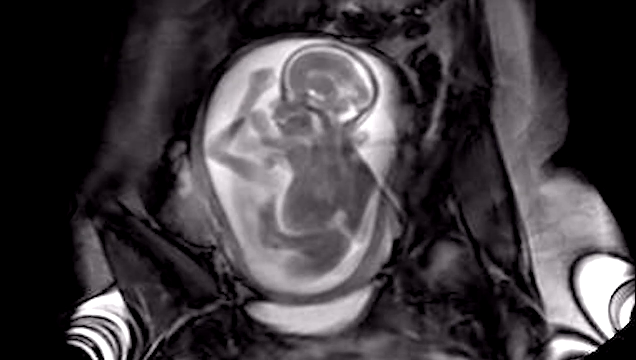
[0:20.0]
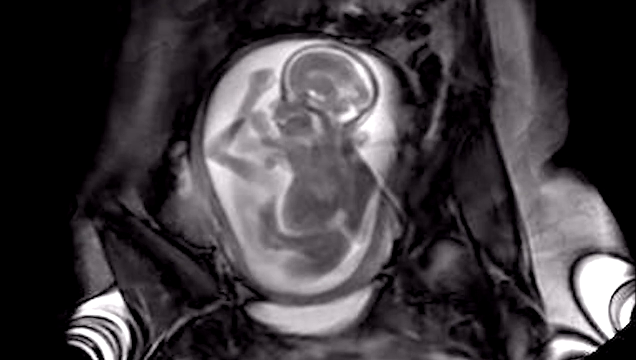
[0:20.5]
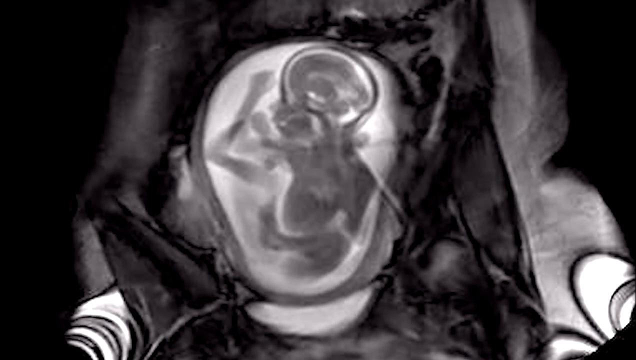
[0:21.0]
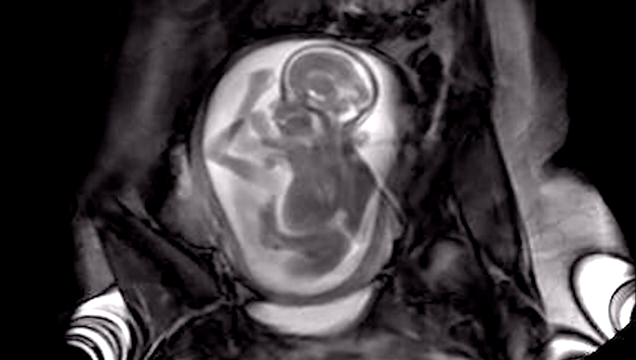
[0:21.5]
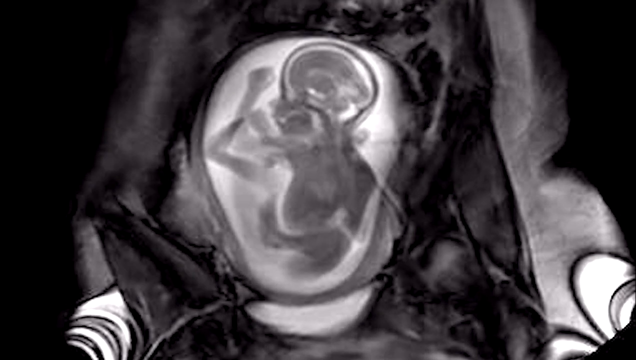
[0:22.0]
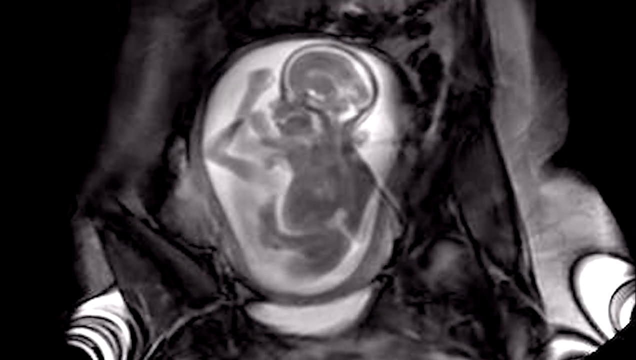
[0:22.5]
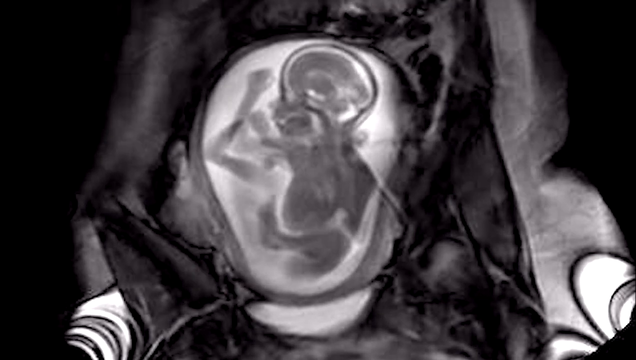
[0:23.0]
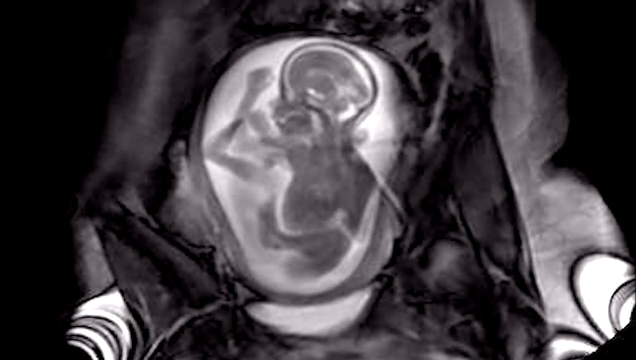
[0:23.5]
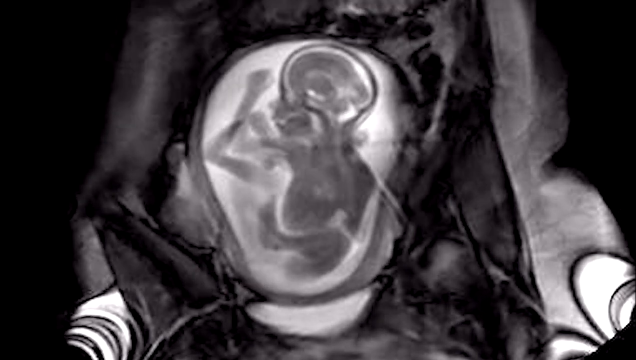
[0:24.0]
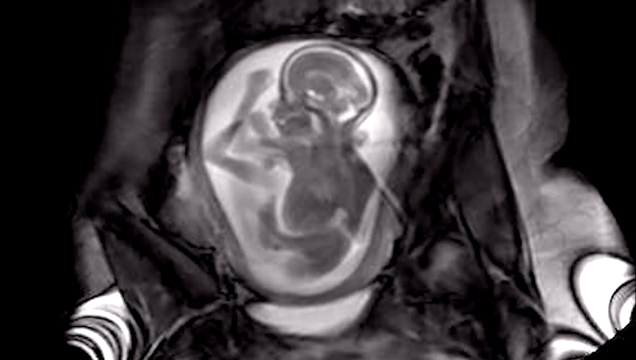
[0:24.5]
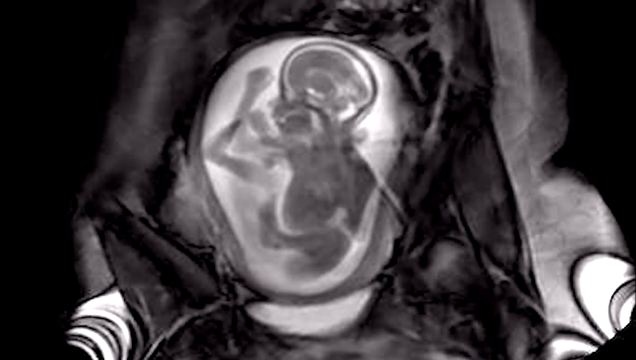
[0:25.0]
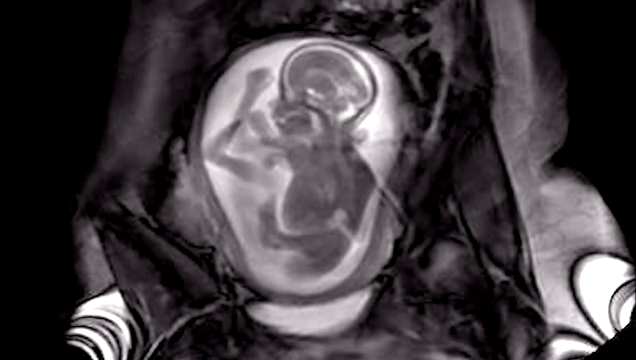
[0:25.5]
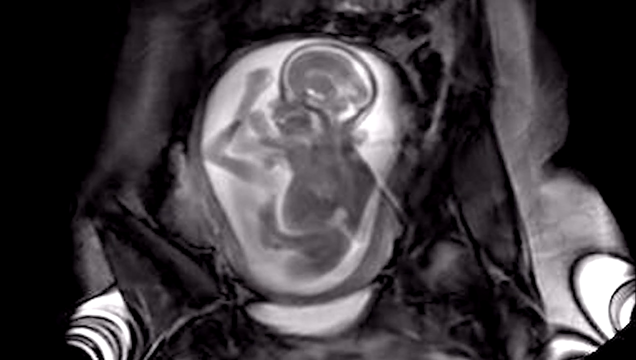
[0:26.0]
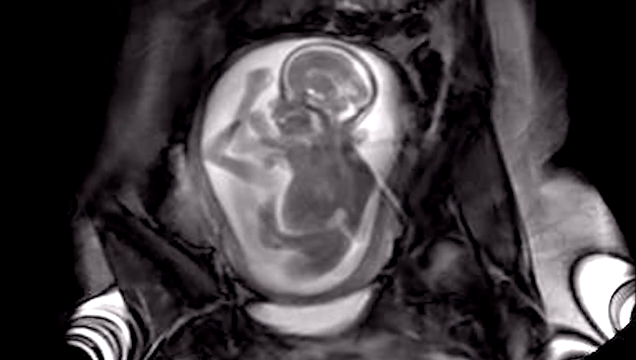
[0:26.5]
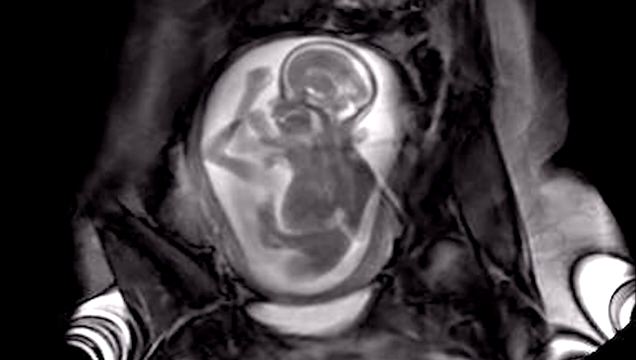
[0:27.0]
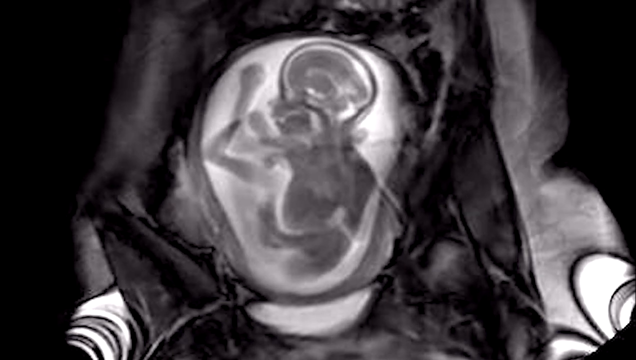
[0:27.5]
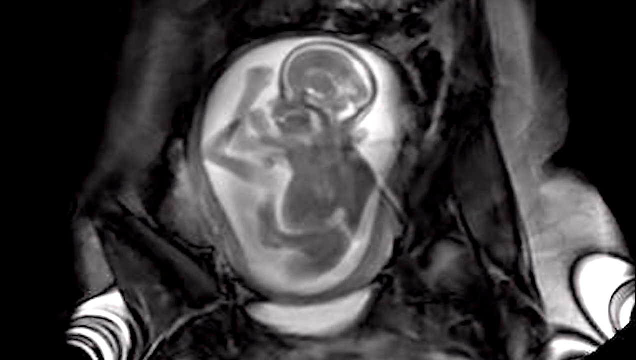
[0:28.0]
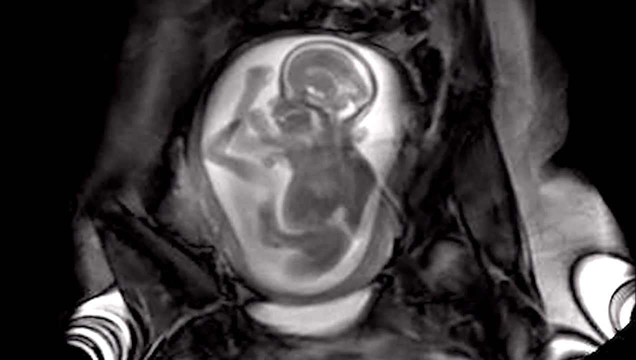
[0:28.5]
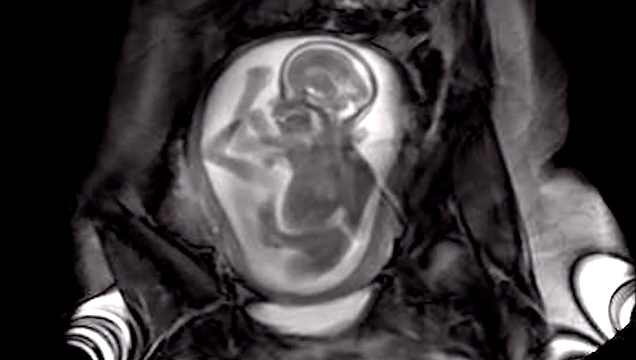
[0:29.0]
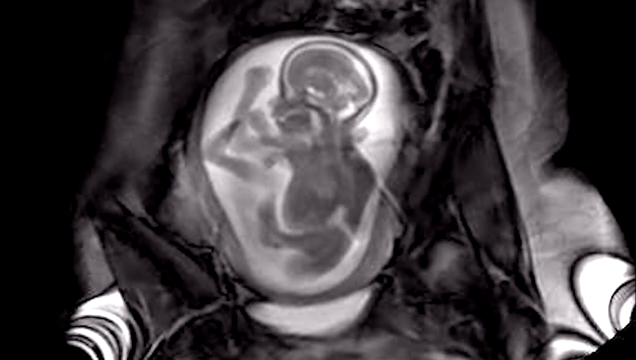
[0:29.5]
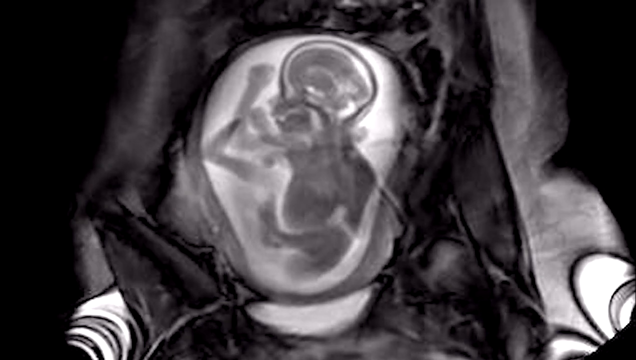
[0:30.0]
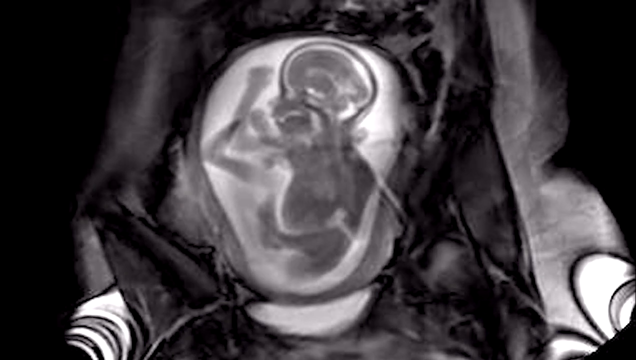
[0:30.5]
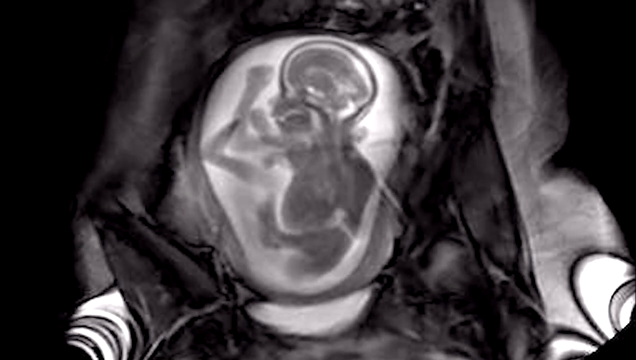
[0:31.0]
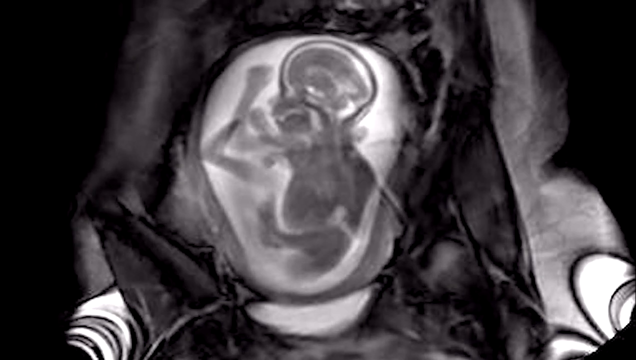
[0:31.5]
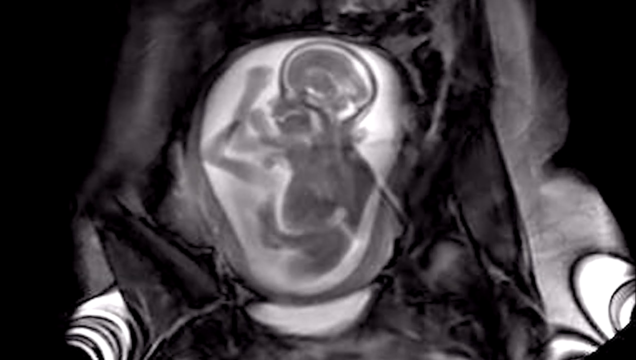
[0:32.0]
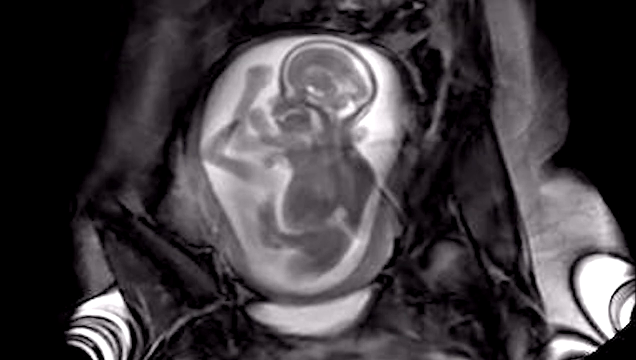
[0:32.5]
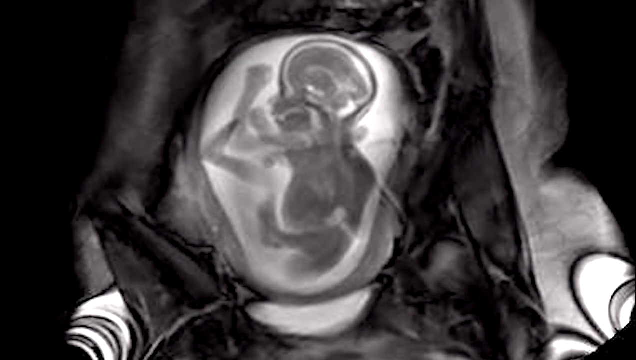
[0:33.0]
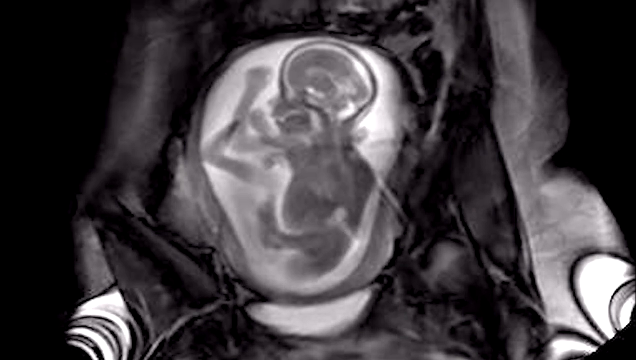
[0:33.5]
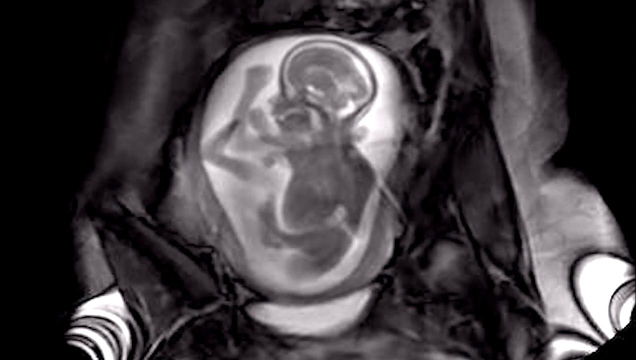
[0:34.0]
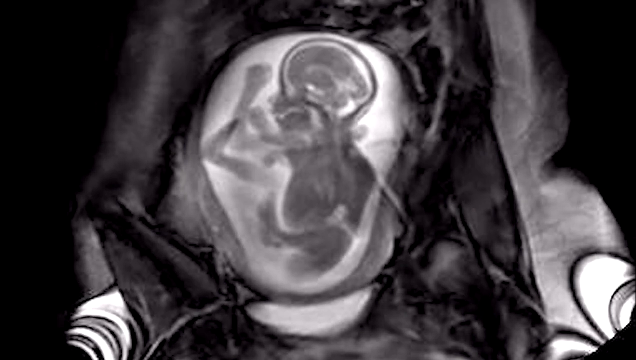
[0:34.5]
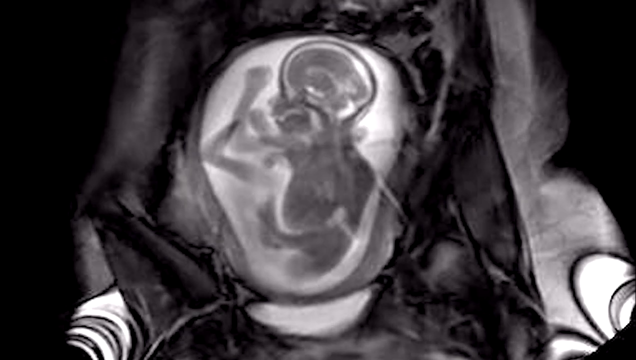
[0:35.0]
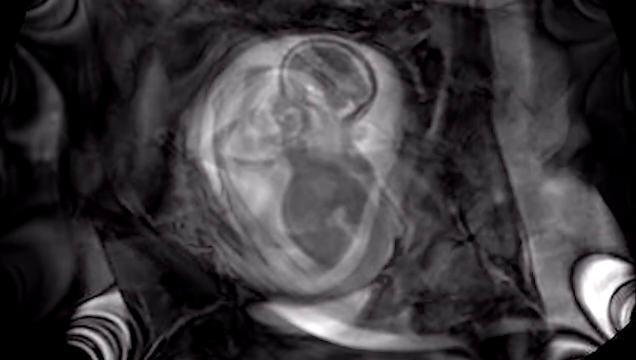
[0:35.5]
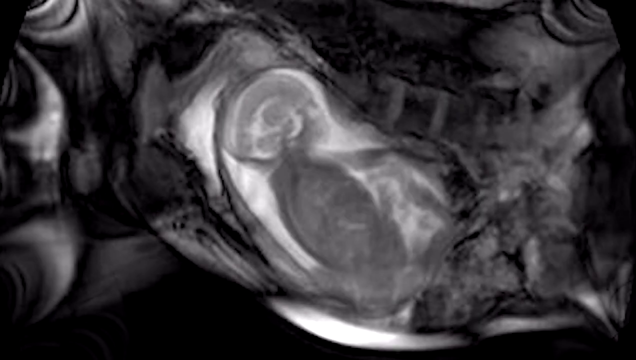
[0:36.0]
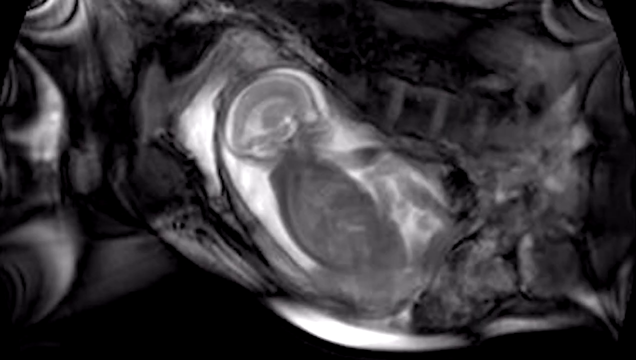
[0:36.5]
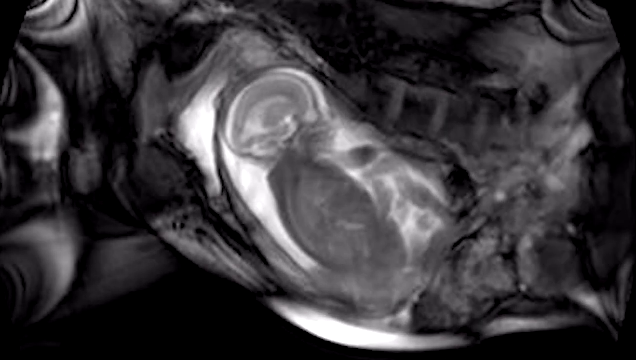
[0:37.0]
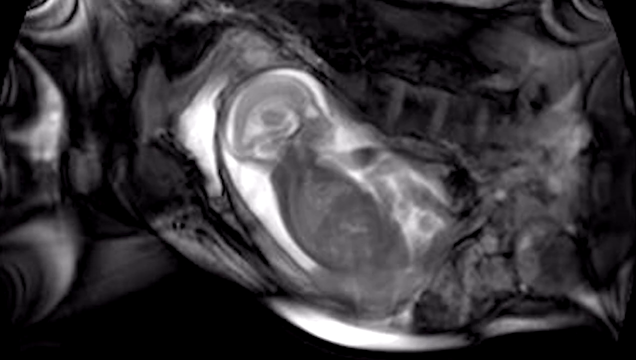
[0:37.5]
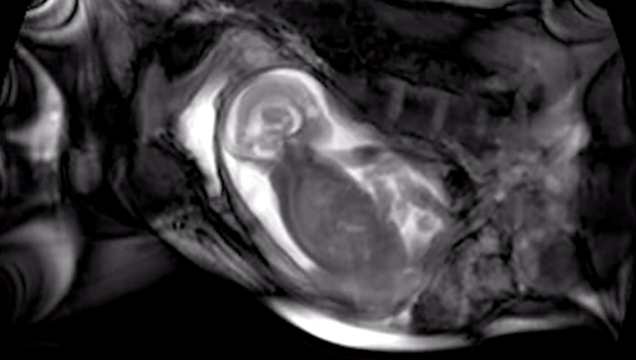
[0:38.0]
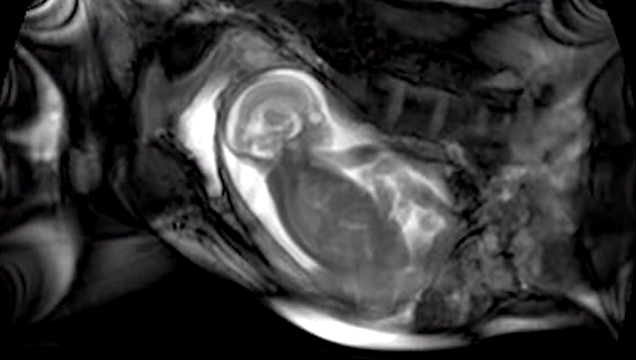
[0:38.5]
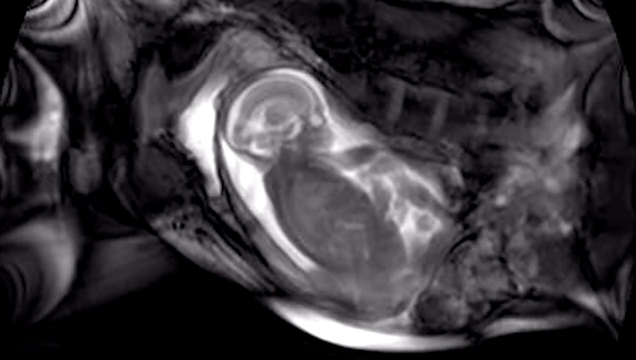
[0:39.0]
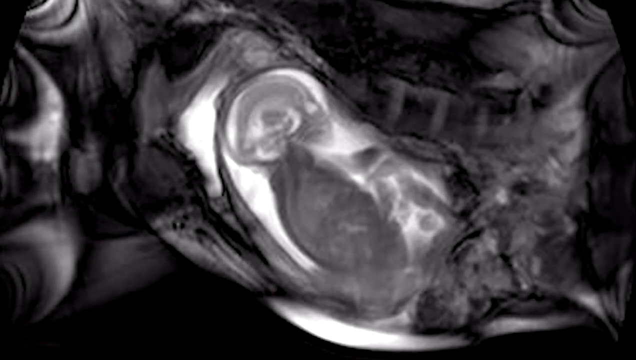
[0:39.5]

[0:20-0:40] A baby that looks to be in an amniotic sac appears as a bit of a silhouette, with its arms and legs visible. A white glow is kind of surrounding the baby's brain, and what kind of looks to be other organs of the mother surround the sac. There are a lot of black shadows, the background is black, and white objects are in the bottom right and bottom left corners. What looks to be the mother's heartbeat is visible, and the baby's heart can also be seen beating. The baby moves its hand around slightly but is mostly still. The view then transitions to another view of the baby in the sac, with some movement on the right side, possibly of vital organs.